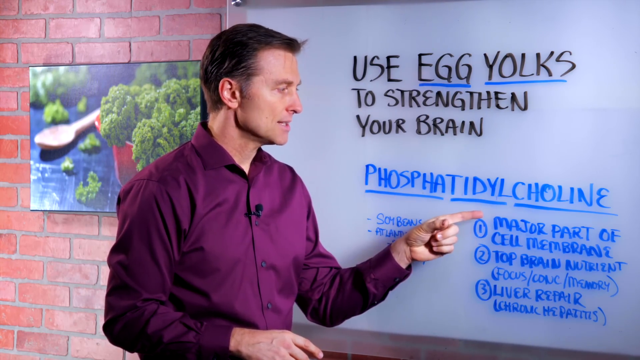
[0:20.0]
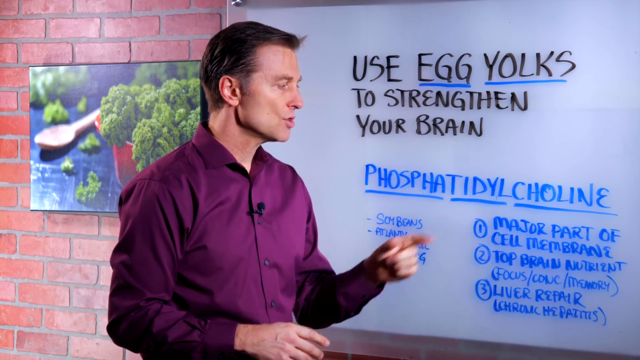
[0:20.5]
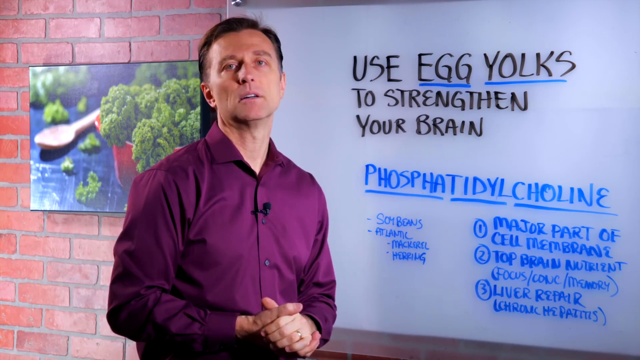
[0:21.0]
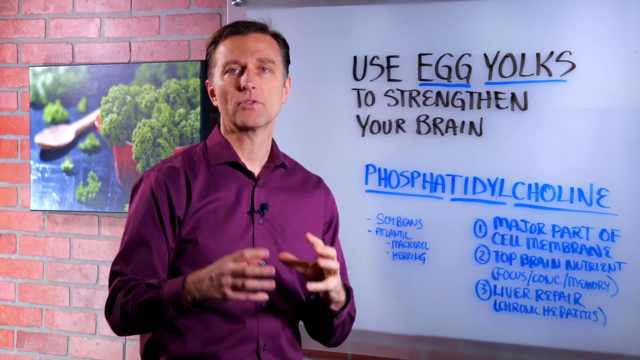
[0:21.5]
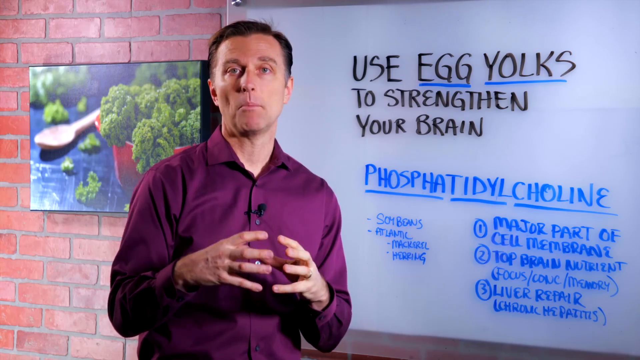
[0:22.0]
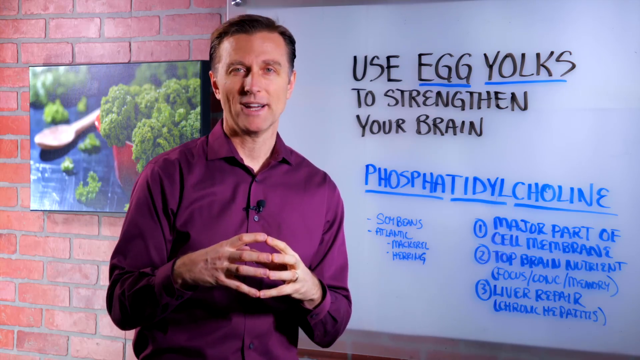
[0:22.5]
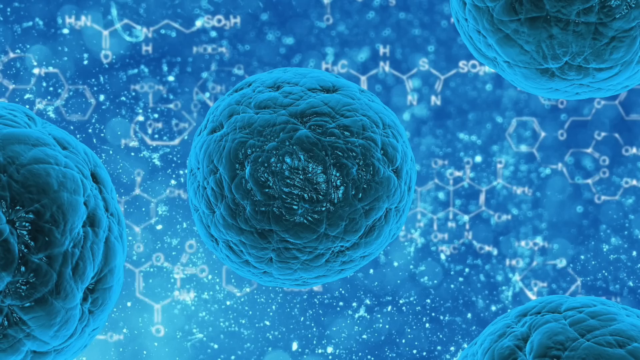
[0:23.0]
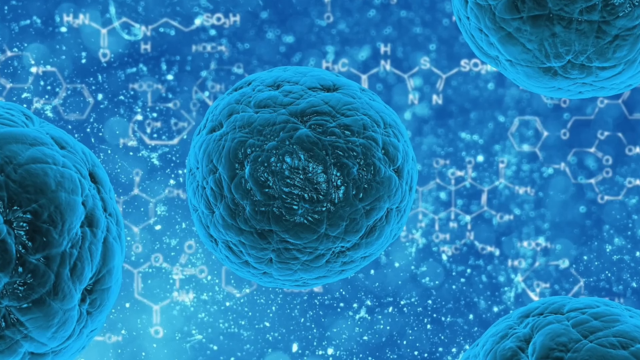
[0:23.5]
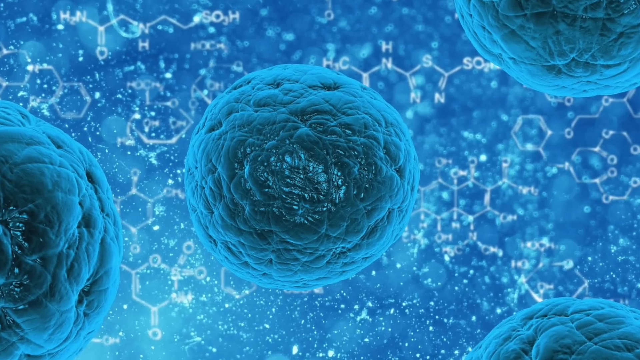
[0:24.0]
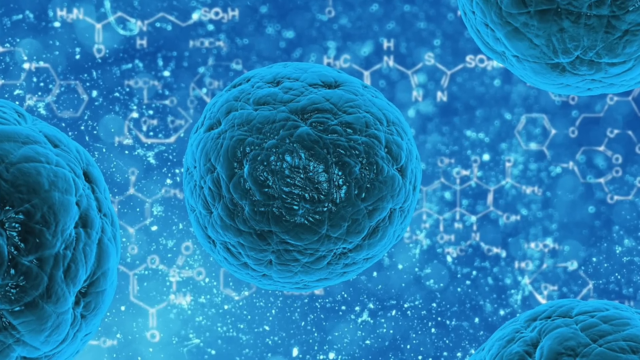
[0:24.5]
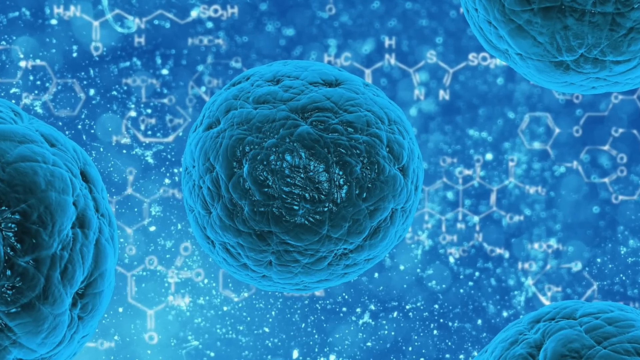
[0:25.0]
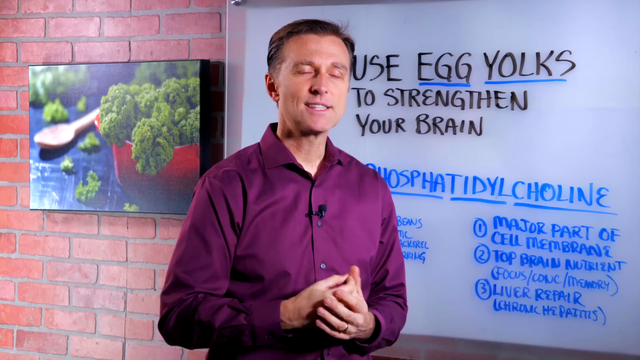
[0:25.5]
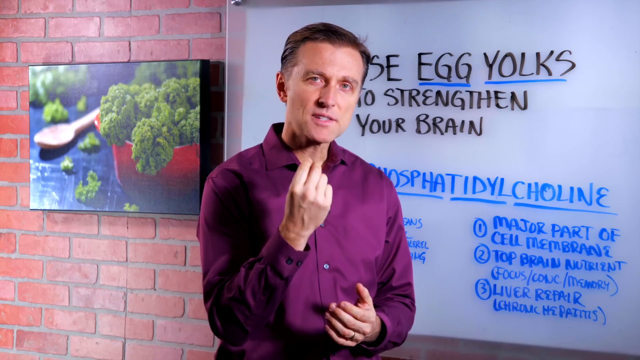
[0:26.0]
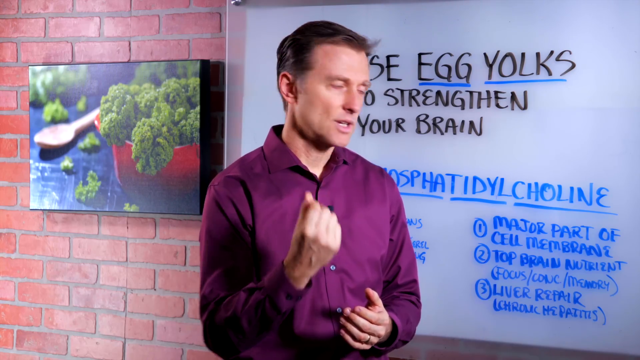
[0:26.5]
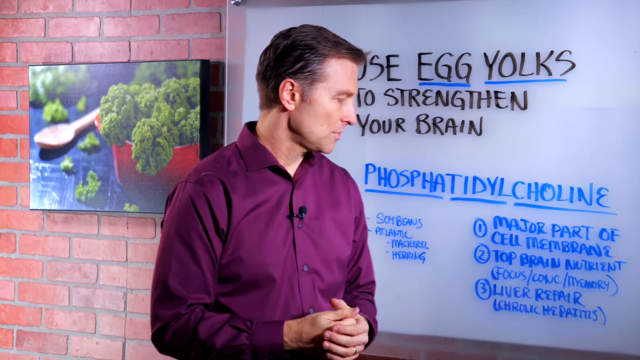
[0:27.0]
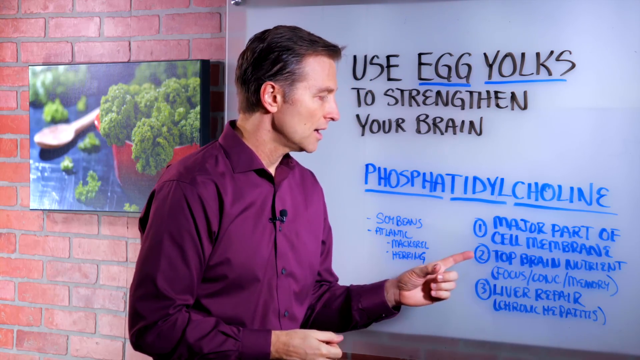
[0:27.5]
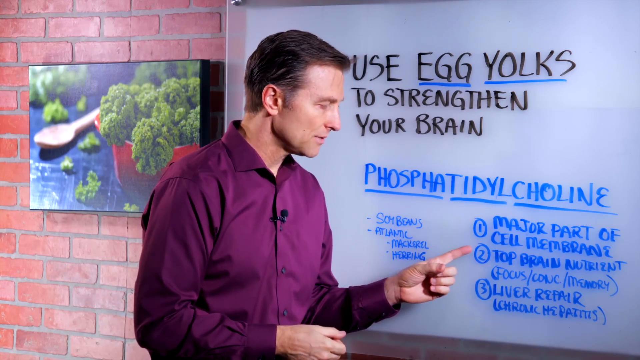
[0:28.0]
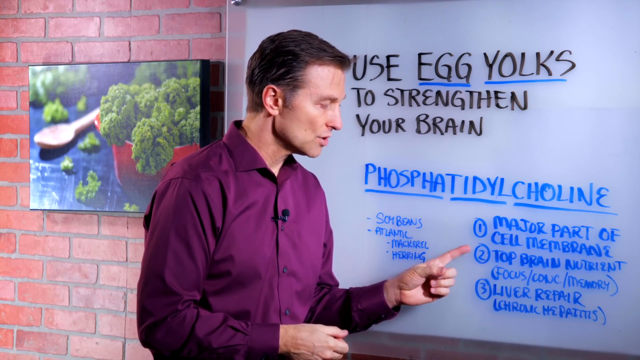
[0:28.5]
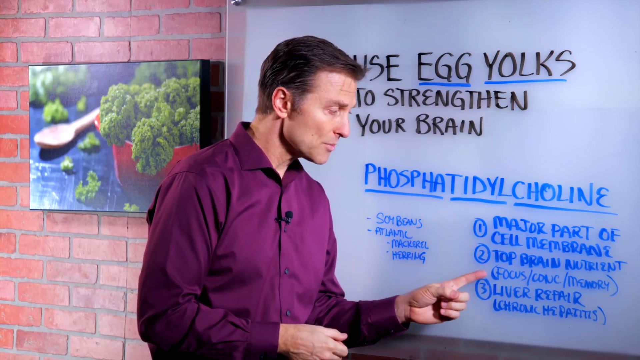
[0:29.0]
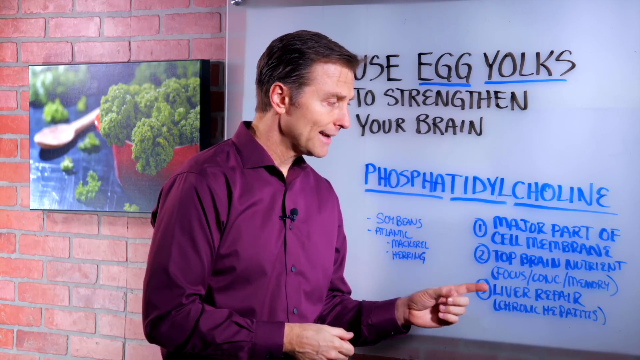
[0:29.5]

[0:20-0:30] A white Caucasian man who appears to be British or American stands in front of a dry erase board, lecturing. Still images appear of what are apparently phosphatidylcholine molecules, which look like round blue spheres. He wears a magenta or purple button-down shirt with the top button unbuttoned, tucked into slacks, with a belt. He somewhat resembles a young Gavin Newsom. The setting seems to be some sort of school or instructional facility. A photo of broccoli, framed in a three-dimensional rectangle, is hung on the wall.